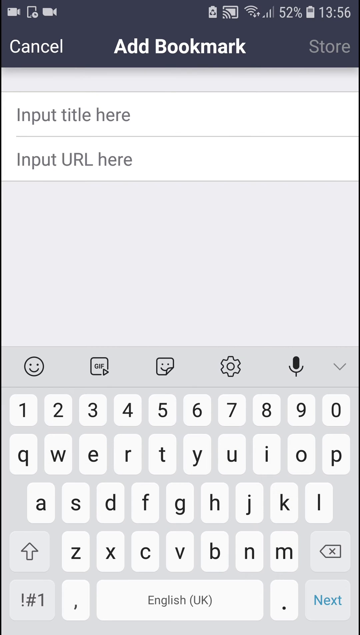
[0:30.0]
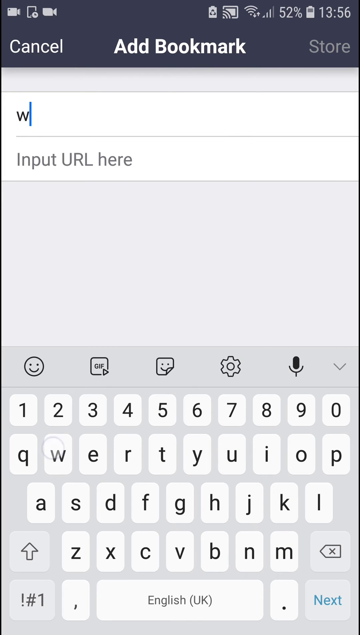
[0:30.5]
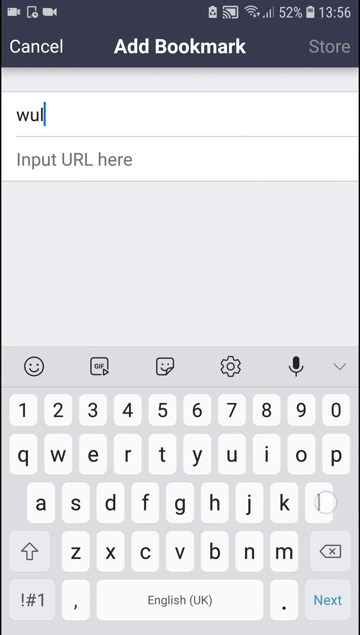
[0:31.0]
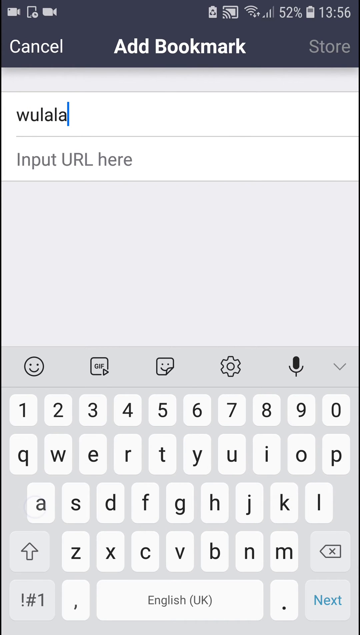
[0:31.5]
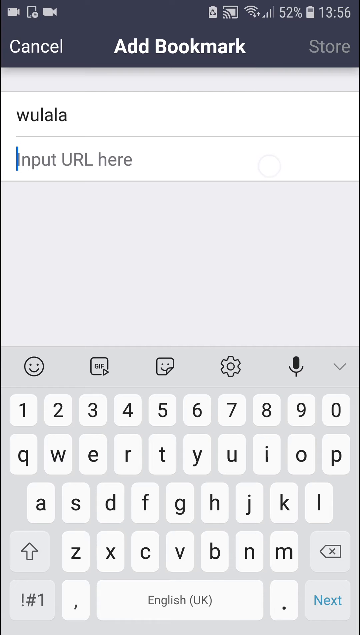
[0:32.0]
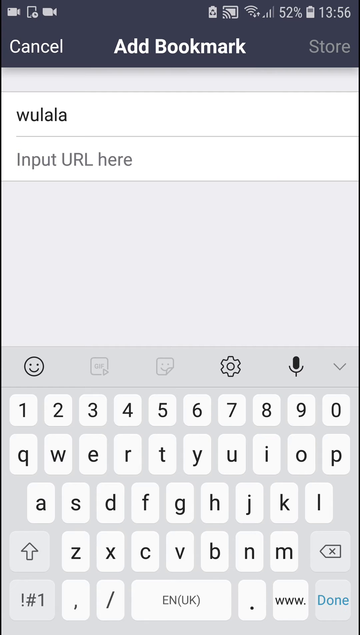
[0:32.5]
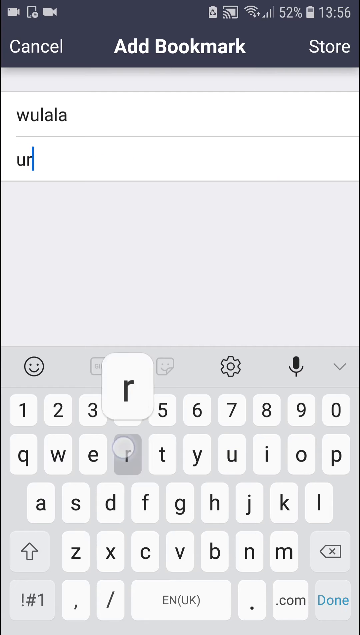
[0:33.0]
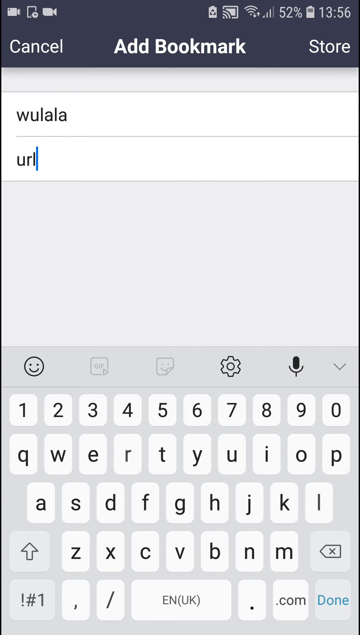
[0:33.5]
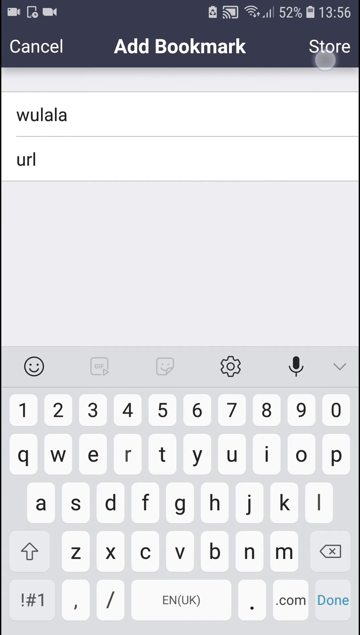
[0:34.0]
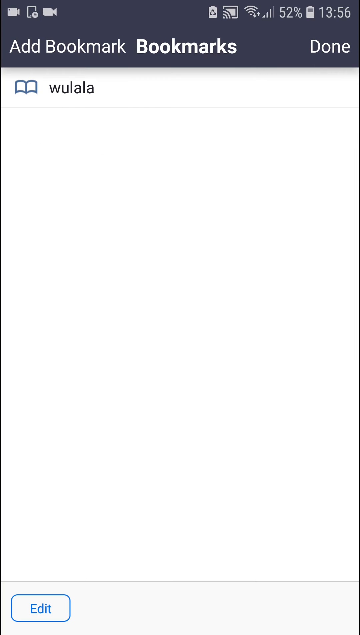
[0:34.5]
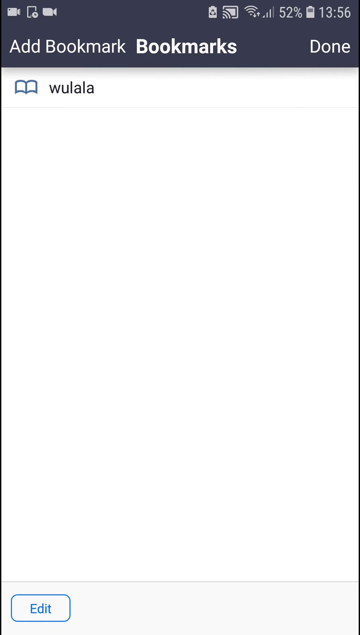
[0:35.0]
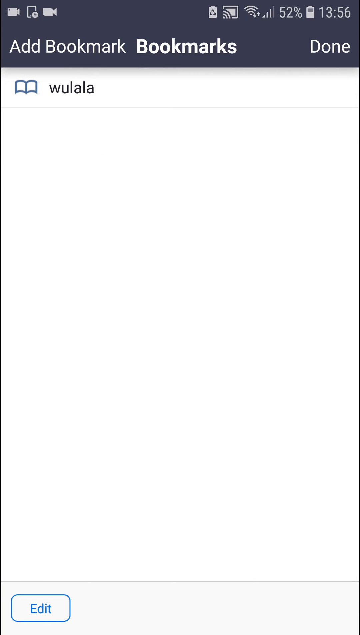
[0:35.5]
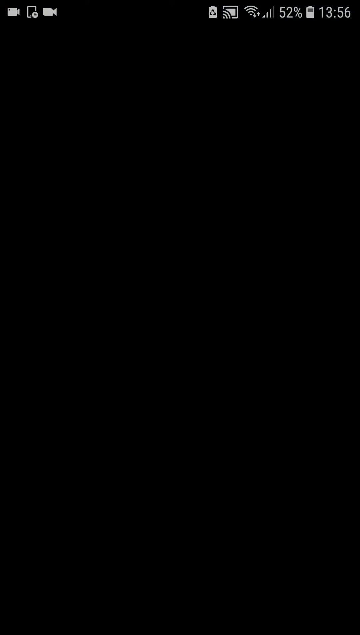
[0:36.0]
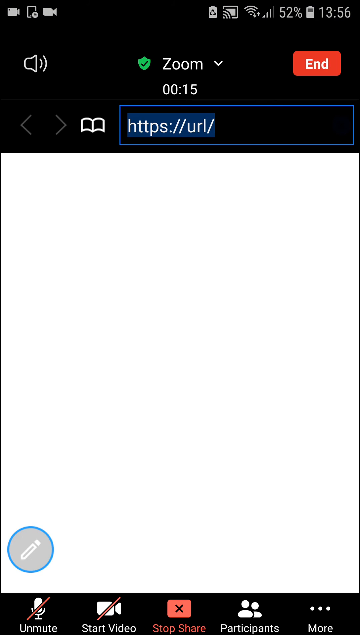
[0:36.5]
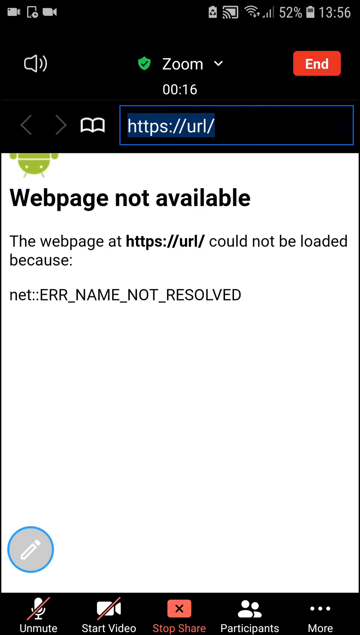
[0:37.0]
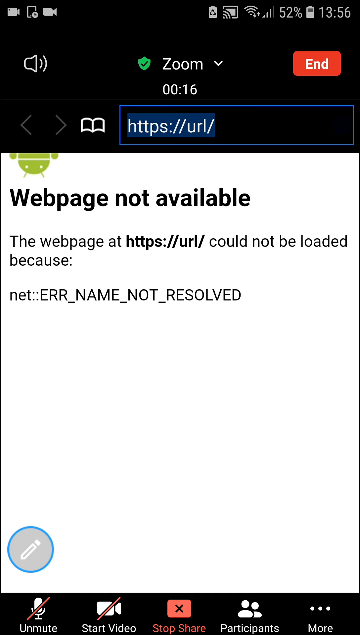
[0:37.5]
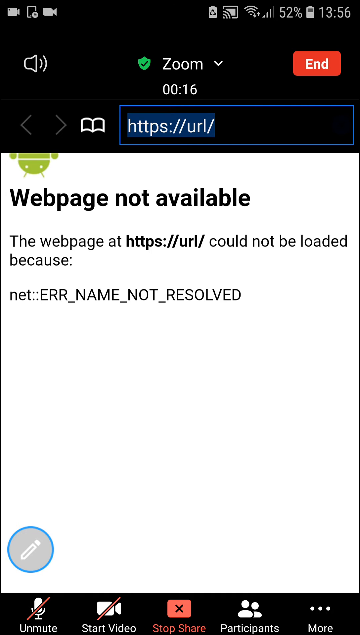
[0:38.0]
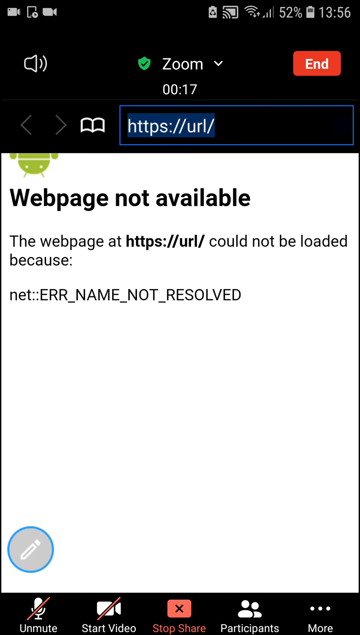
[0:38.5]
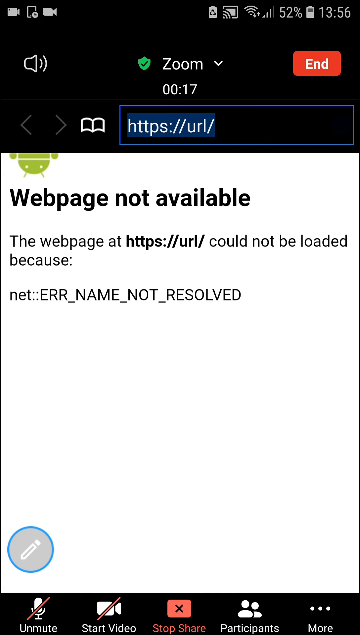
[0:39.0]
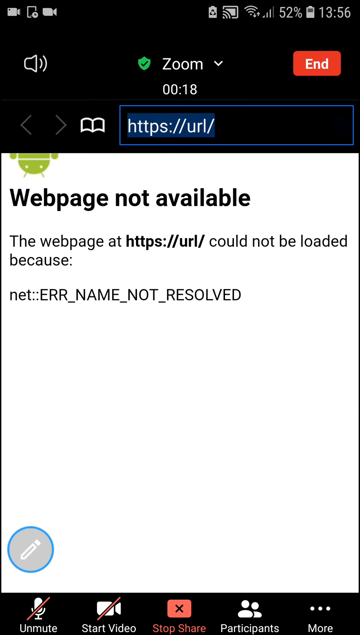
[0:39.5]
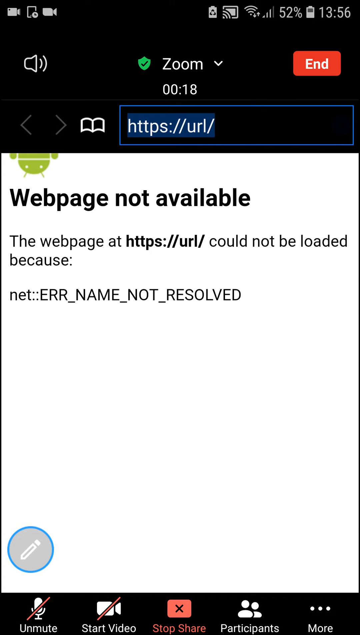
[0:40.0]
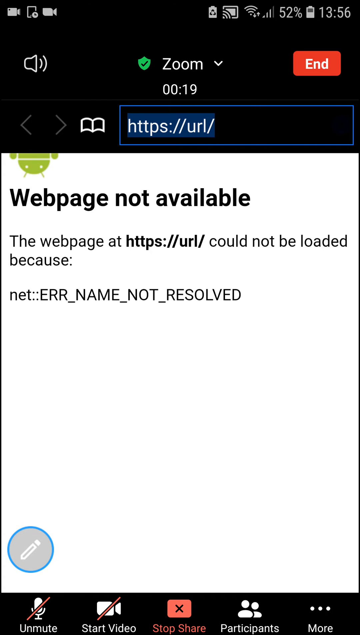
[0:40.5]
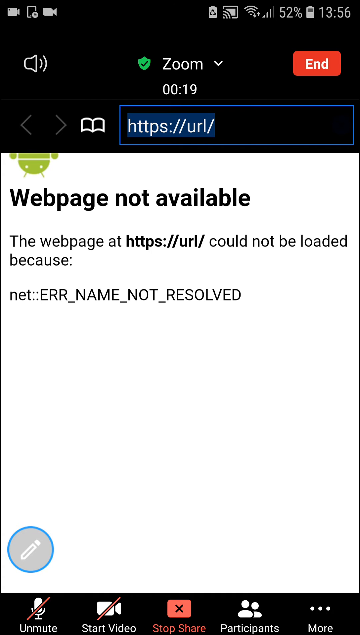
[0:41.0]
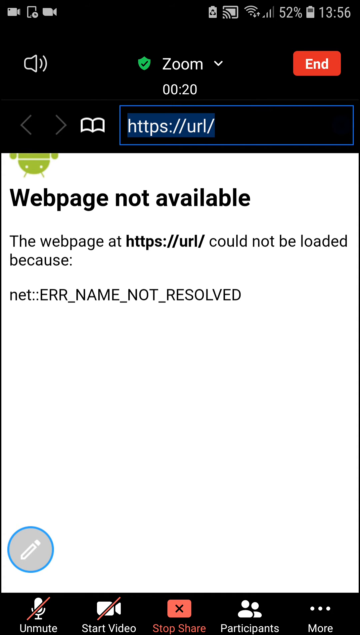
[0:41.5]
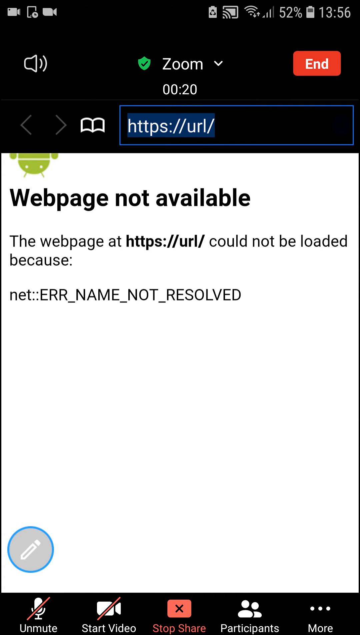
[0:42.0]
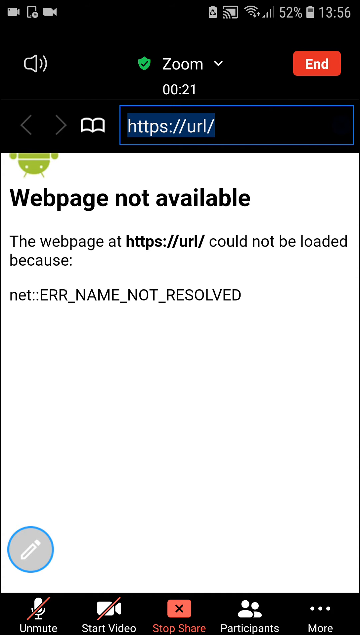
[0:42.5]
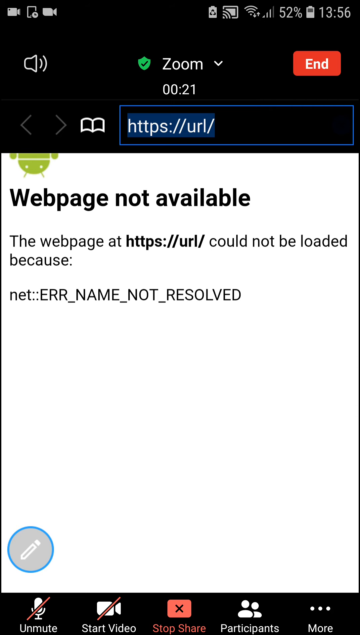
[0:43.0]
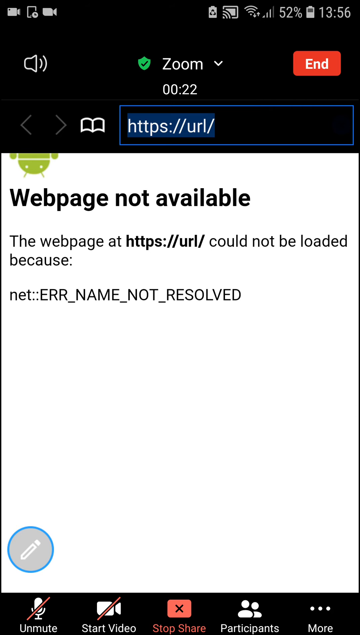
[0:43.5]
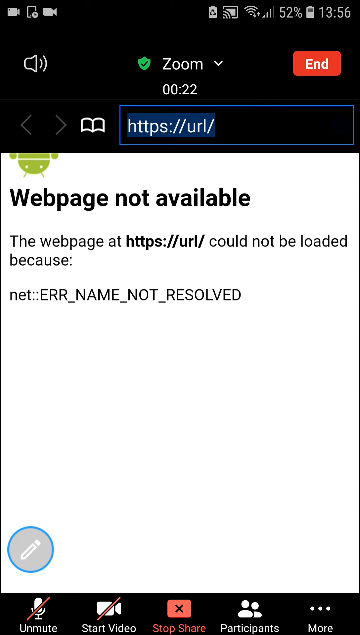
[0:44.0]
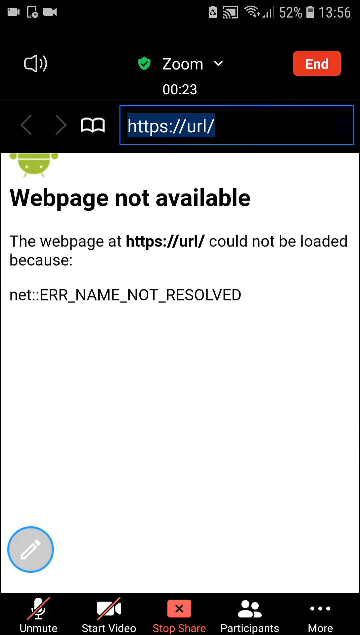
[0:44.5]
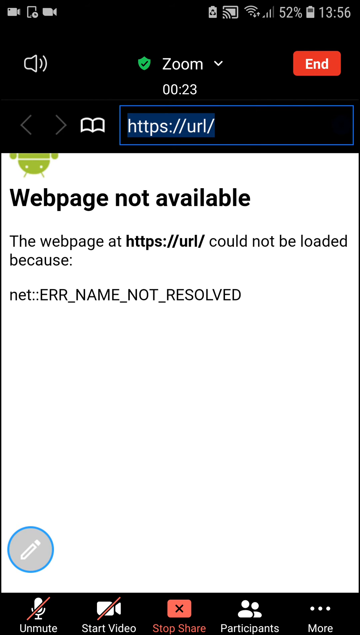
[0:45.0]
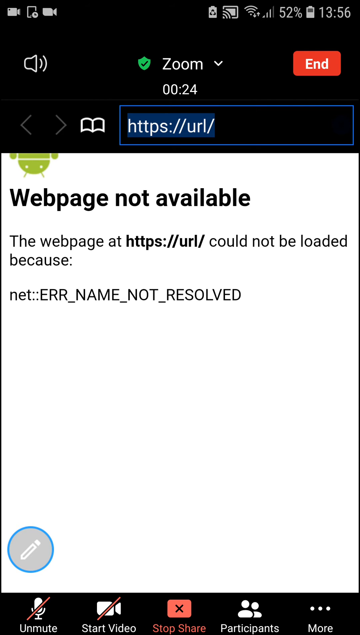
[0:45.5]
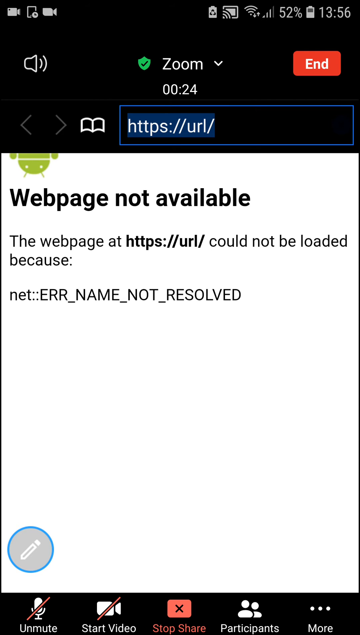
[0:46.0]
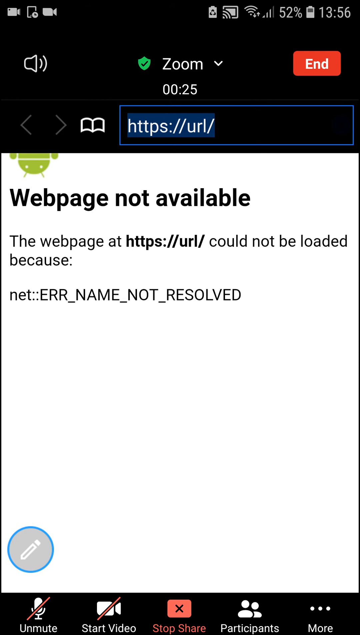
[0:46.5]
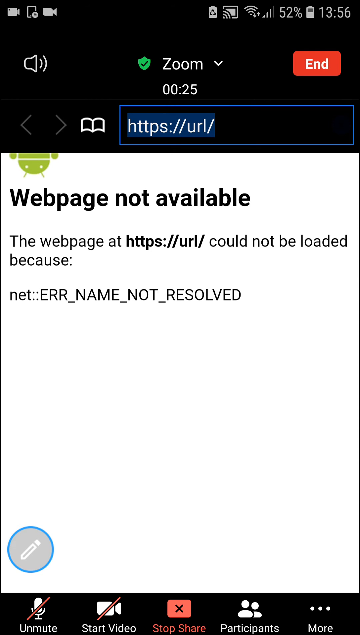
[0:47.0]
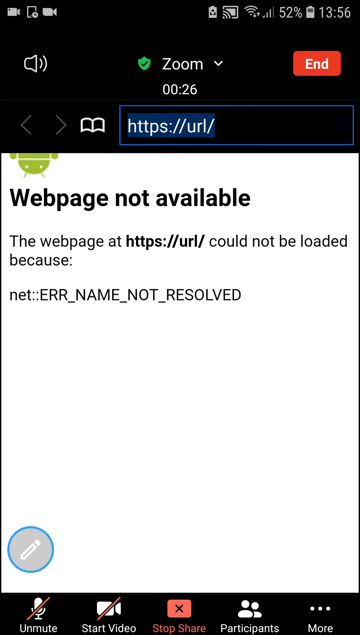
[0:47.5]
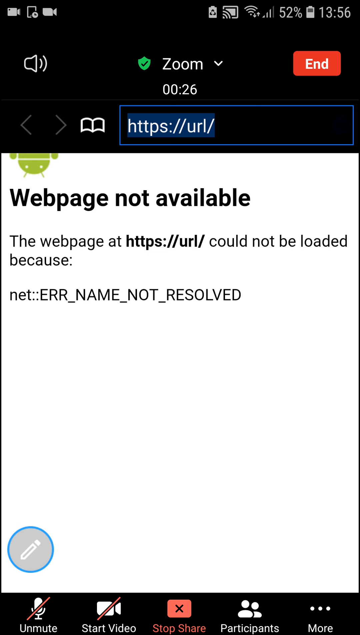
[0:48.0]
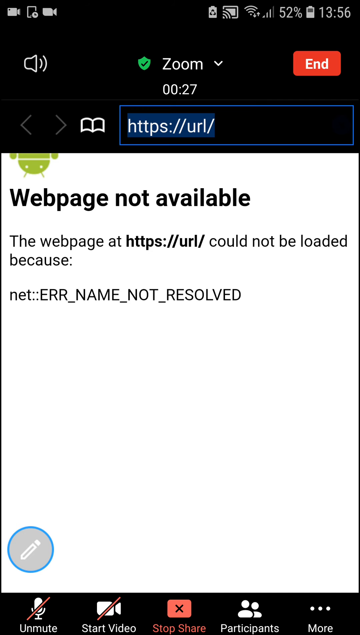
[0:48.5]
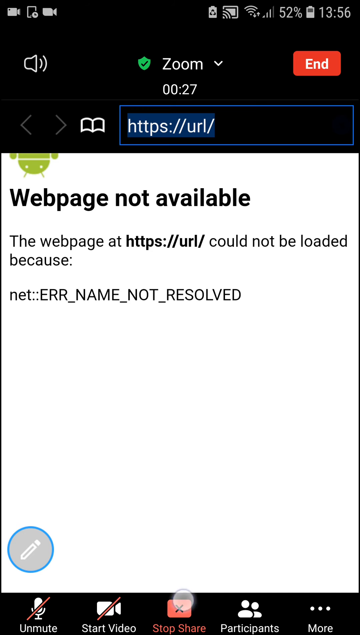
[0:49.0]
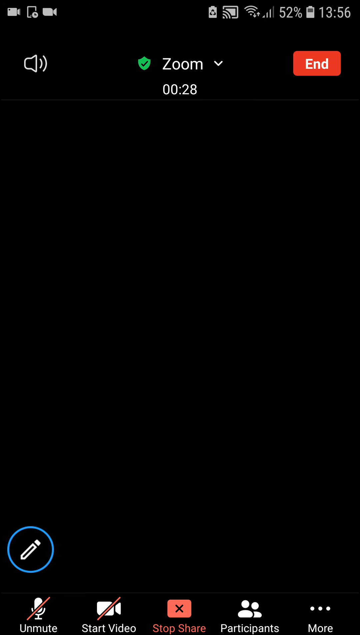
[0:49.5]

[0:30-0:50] He adds a bookmark, typing the name in black text as W-U-A-L-L-A, and enters U-R-I-L as the URL. He taps done. A "website not available" page appears with the error "name not resolved". A timer counts up as he uses Zoom, reaching 20 seconds and rising. The Zoom chat is ongoing, with a microphone button, a sound button and a red button to end the chat. The background is white, the text is black, and the add-bookmark heading is dark black or blue. There are options to cancel adding the bookmark or to store it. The phone is at 52% charge, and the background is all black, white and grey. A keyboard for typing is shown, set to UK English.